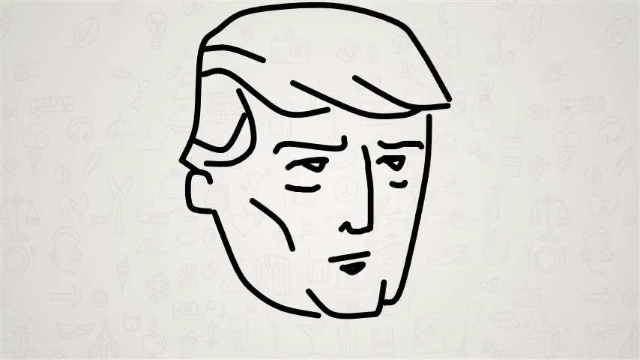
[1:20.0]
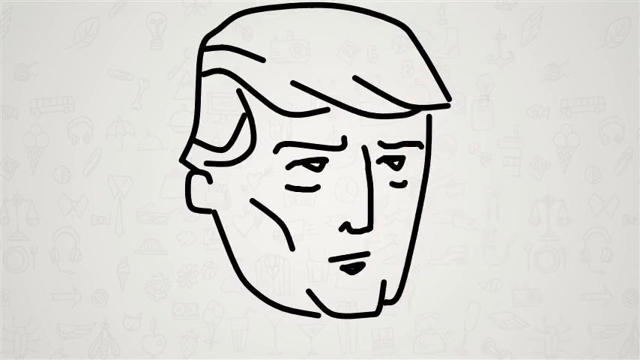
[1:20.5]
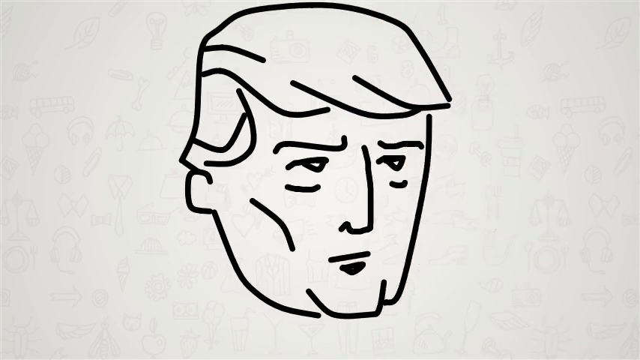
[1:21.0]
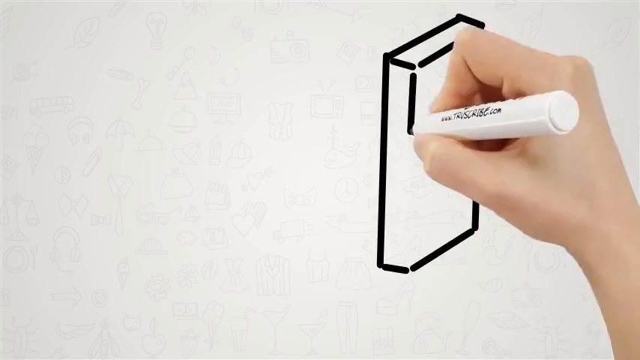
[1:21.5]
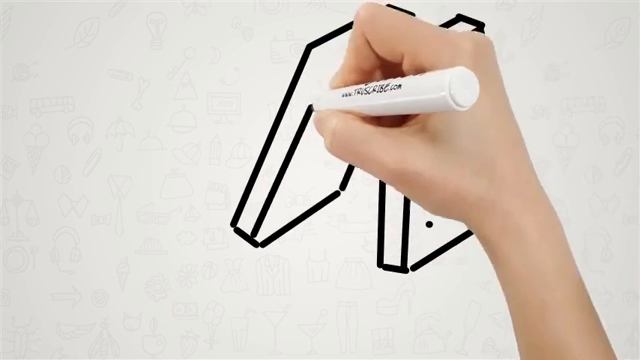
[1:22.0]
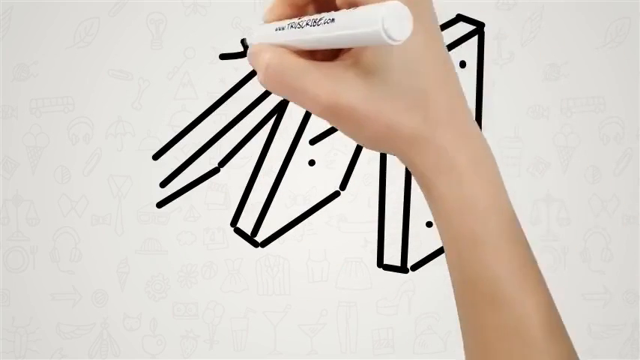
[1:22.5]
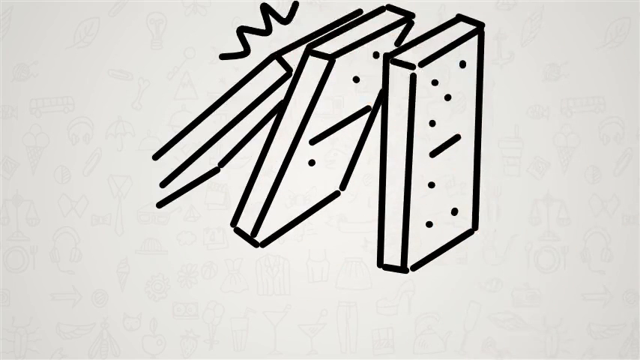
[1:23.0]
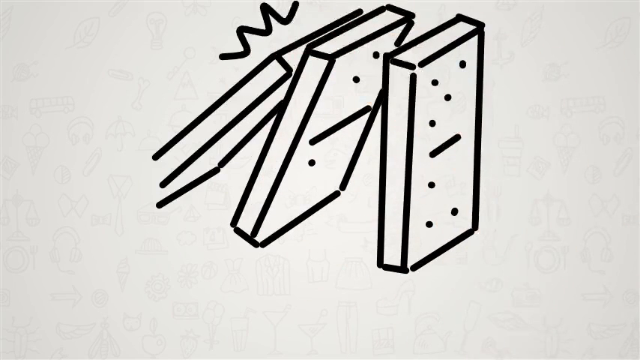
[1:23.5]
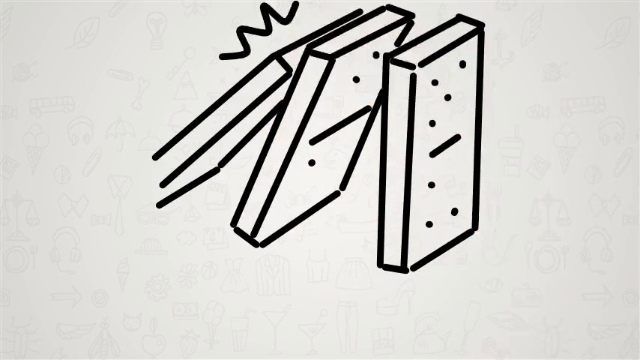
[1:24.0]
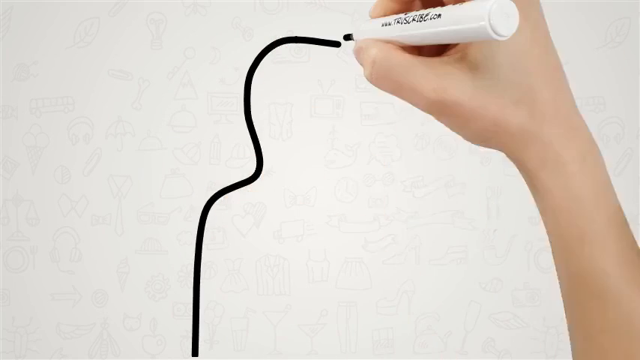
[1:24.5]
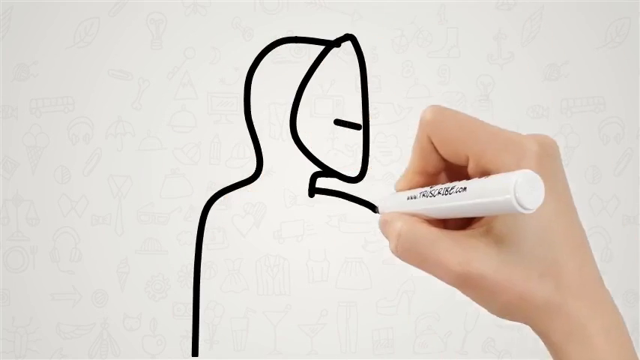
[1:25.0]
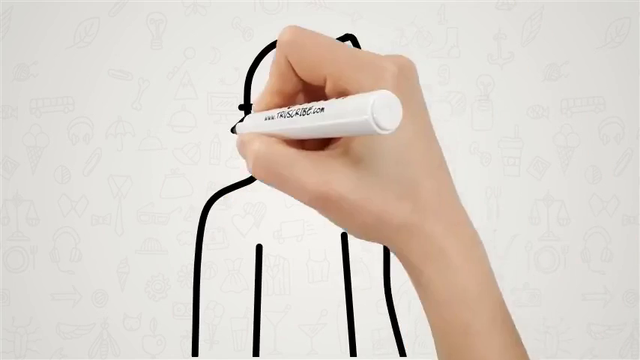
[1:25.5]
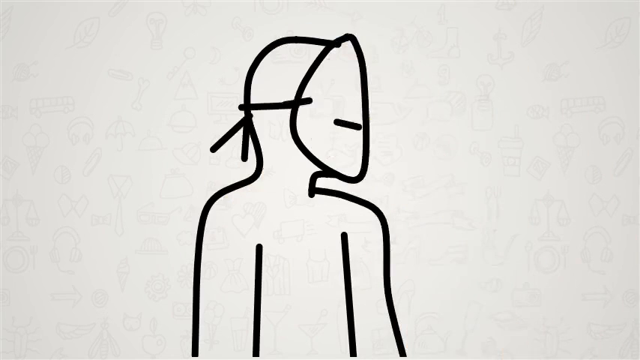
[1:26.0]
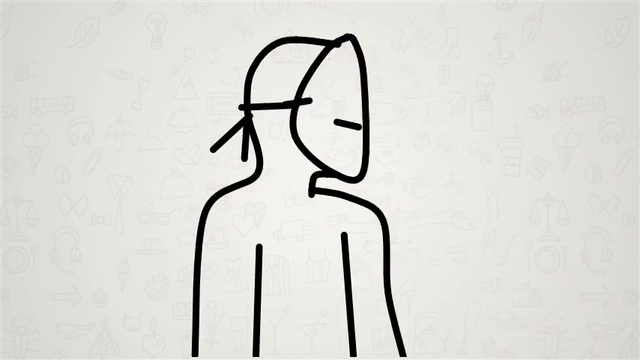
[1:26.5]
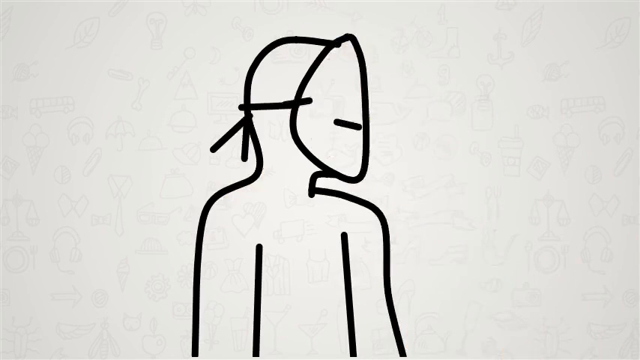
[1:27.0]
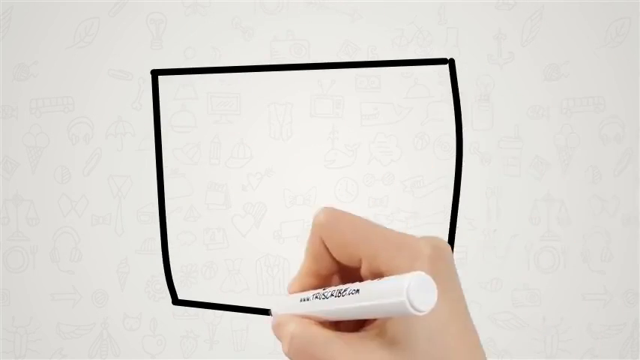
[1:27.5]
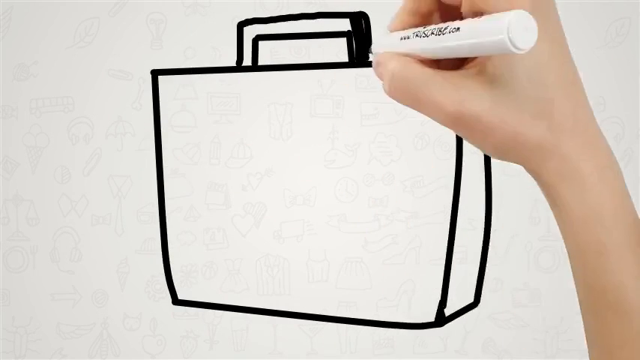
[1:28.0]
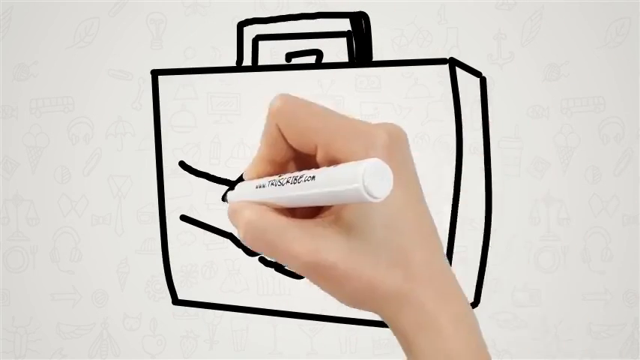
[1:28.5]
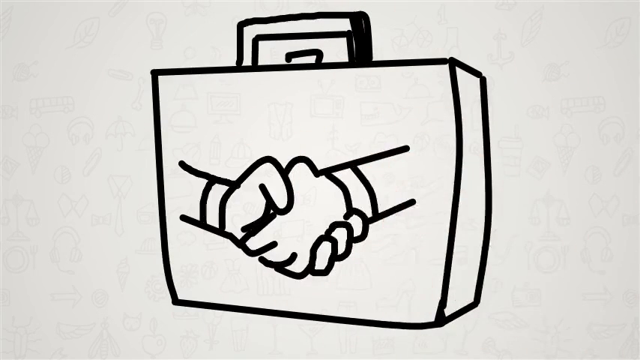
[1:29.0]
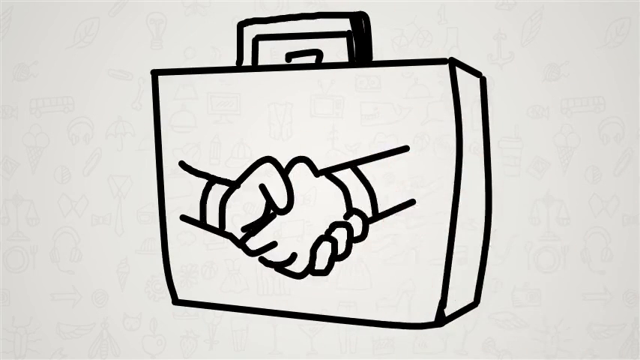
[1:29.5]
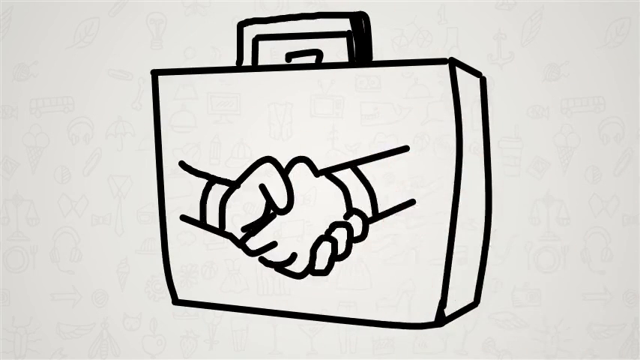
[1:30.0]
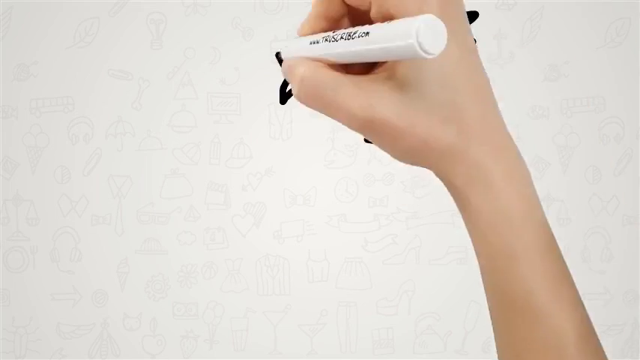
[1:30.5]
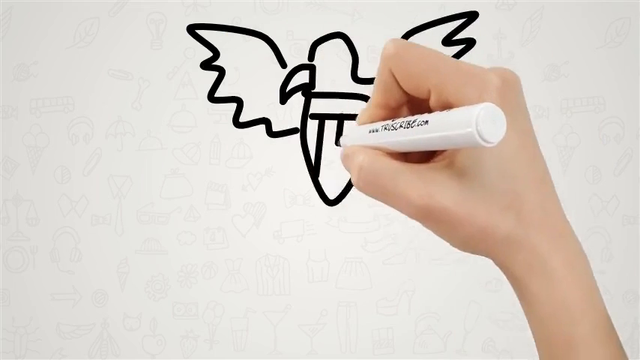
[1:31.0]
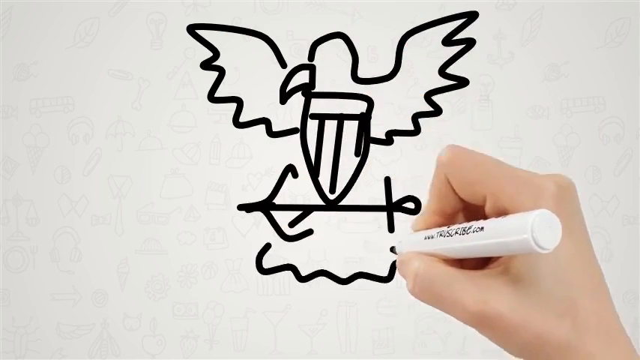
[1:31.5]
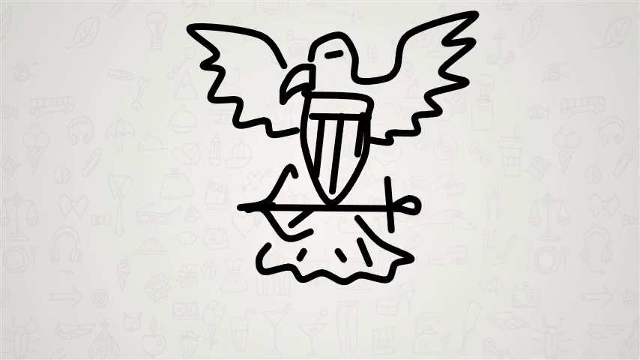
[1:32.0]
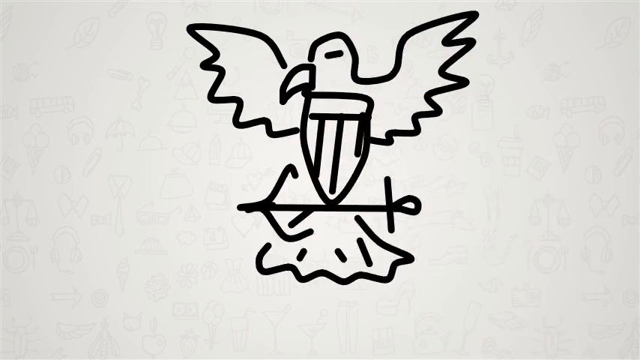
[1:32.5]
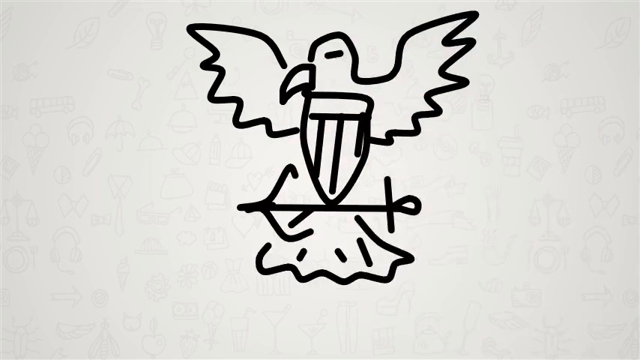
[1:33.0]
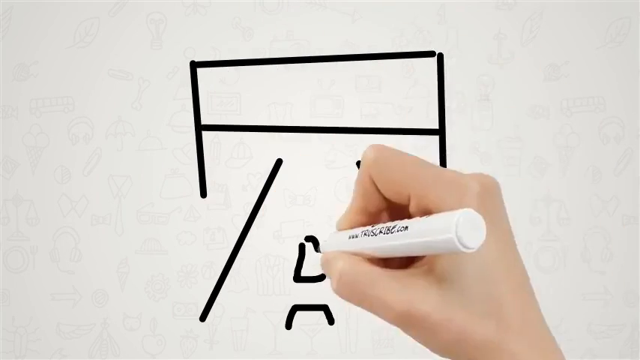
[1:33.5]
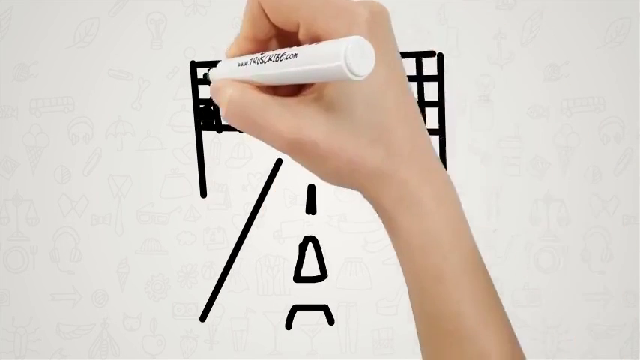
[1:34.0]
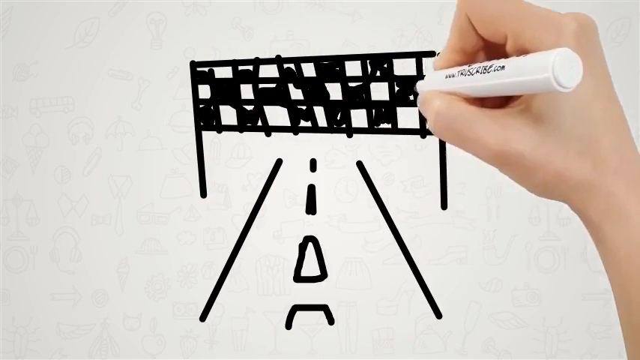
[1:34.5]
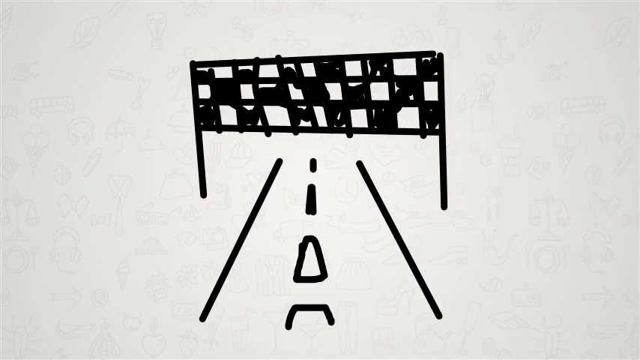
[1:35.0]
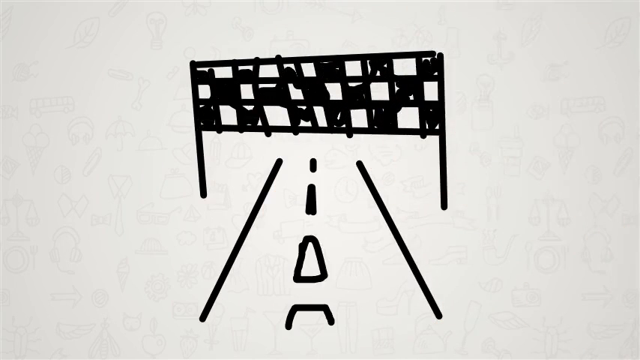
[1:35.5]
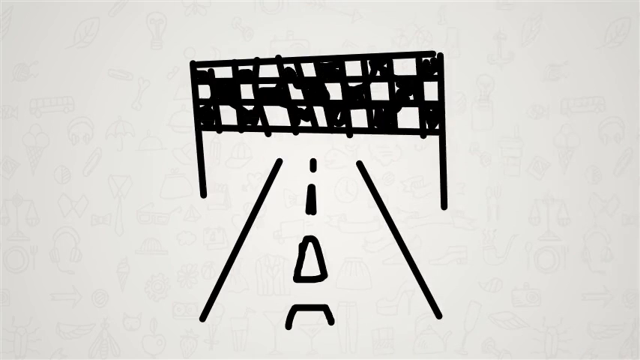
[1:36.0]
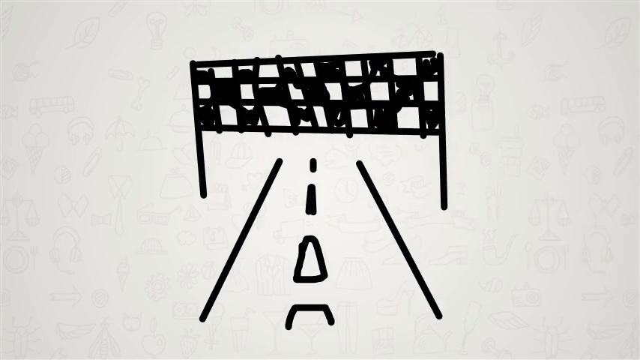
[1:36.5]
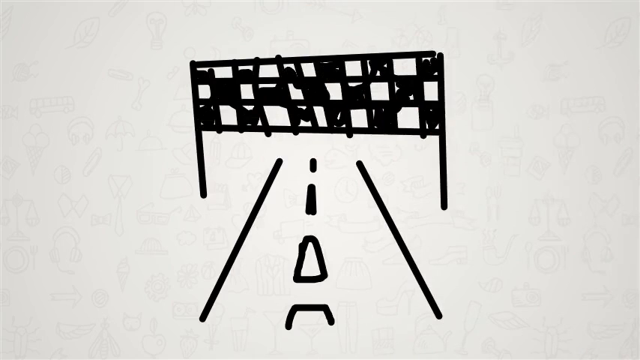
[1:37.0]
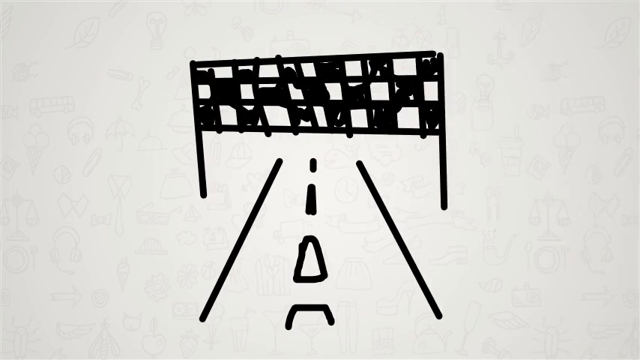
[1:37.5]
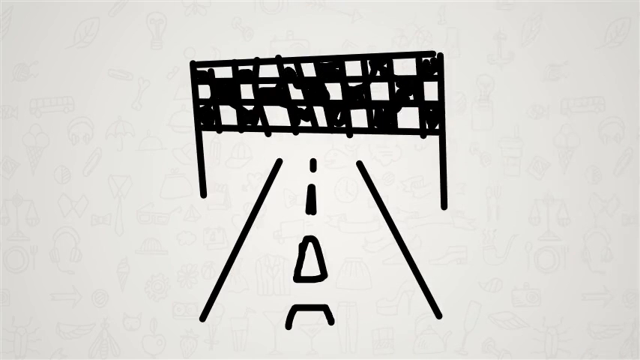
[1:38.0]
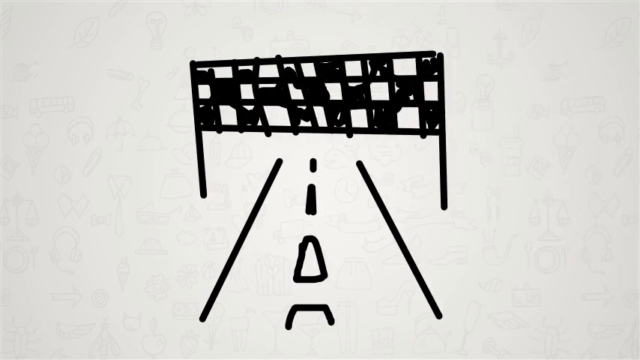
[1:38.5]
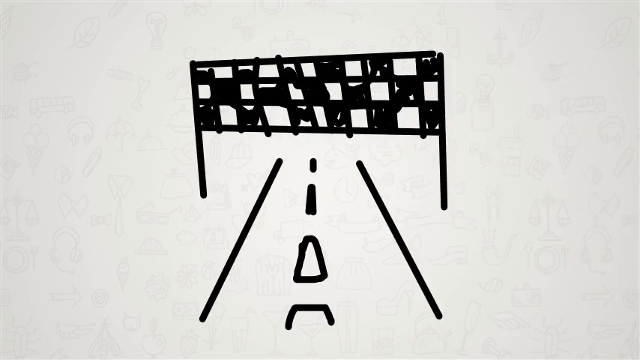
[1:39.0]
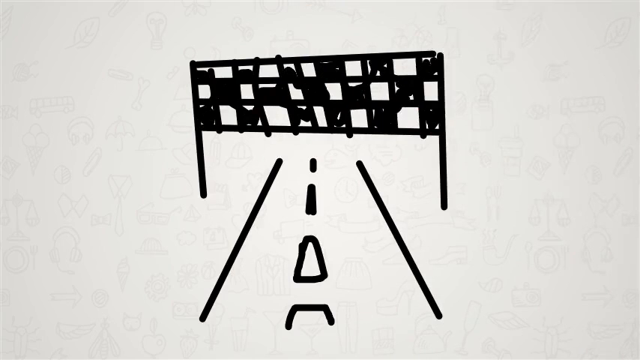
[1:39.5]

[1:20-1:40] On a white background, a white person's hand and part of their arm hold a white pen with black writing on it, drawing in black ink one drawing after another; once each drawing is completed, it disappears and is replaced by the next. The first drawing is of Donald Trump: two eyes, his nose, his combed-over hair, one of his ears, his chin, his eyebrows and two lines under each of his eyes, with his mouth looking closed; it appears to be a black outline drawing. Next is a black outline drawing of three dominoes. The one on the left-hand side has toppled over, showing only its side, with a squiggly black line behind it indicating that it has tipped forwards. In front of it is a domino that has been hit by it and is toppling forward; its top part has two dots, one above the other, and below a horizontal line is a single dot. Next to that on the right, just about to be hit, is another domino standing up, also divided by a line, with four dots above it and three dots below. Then comes what looks like the outline of the top half of a person wearing a mask with a single horizontal line on it, attached by a black piece of string with two pieces of string at the back; it appears to be a full face mask covering the whole head. Next is a briefcase with a handle on top, with two hands doing a handshake on it, part of their arms visible. Then comes what looks like an eagle, perhaps the American eagle, with an emblem in front of it in a shield shape with three vertical lines and one horizontal line; it appears to be perched with its tail on some sort of wired line. Finally, what looks like a racetrack is shown from a front-on view going upwards, with little lines on the road, and above it what looks like a finishing line: a black and white checkerboard flag going over the track.